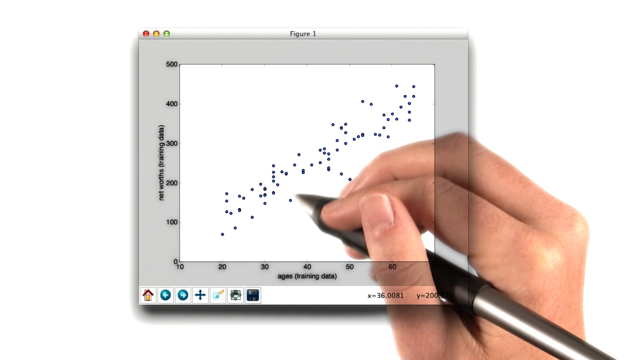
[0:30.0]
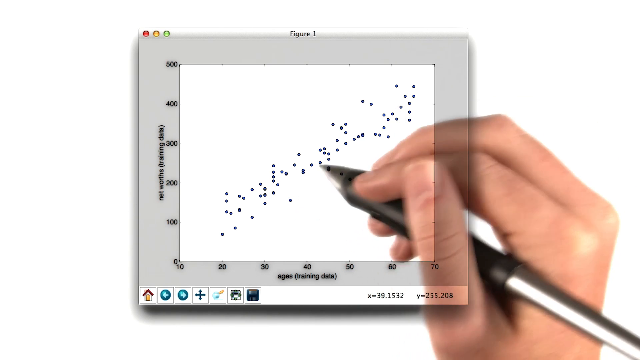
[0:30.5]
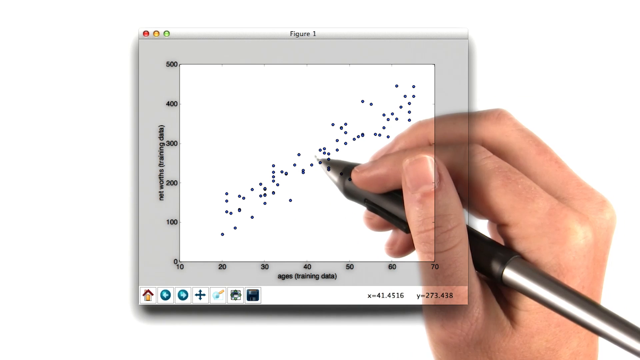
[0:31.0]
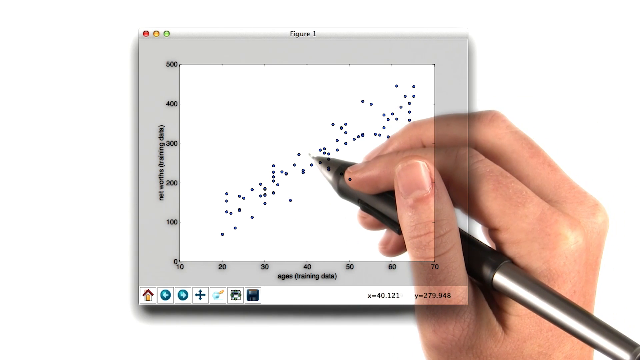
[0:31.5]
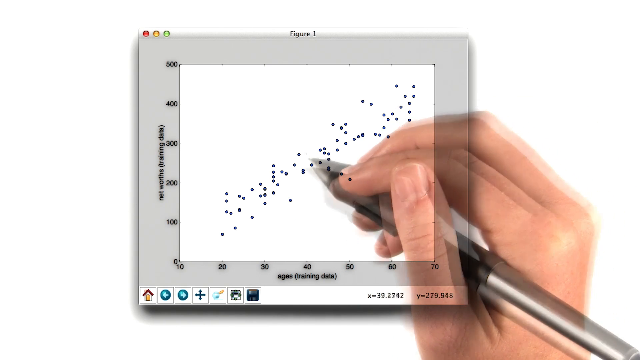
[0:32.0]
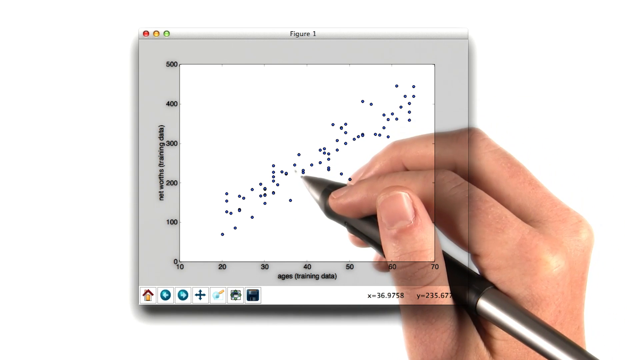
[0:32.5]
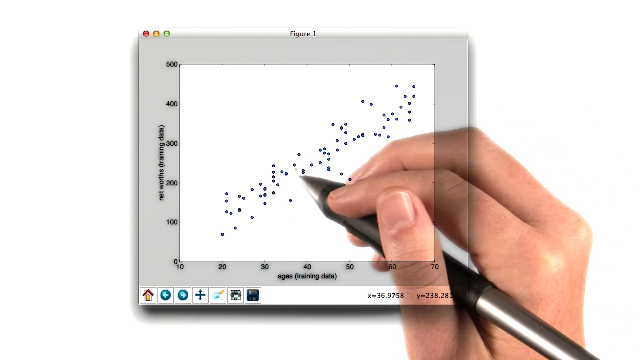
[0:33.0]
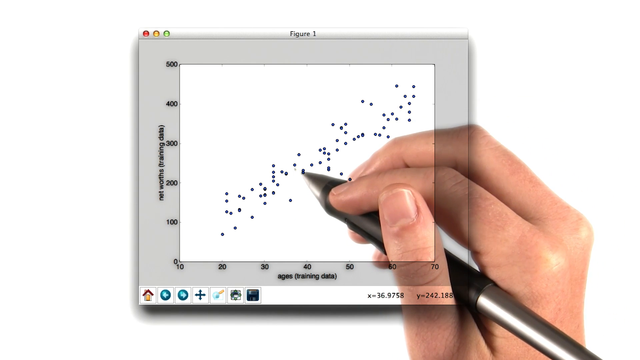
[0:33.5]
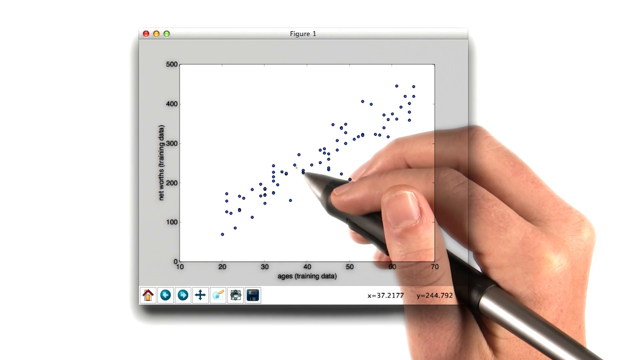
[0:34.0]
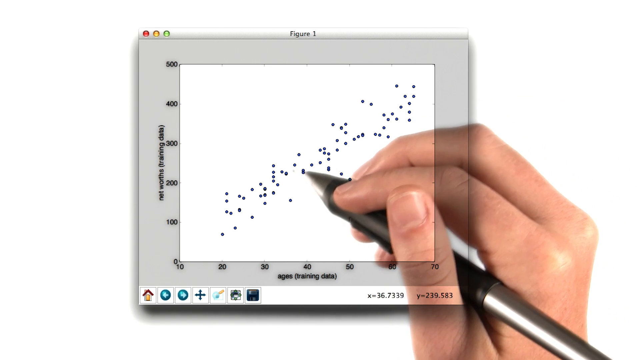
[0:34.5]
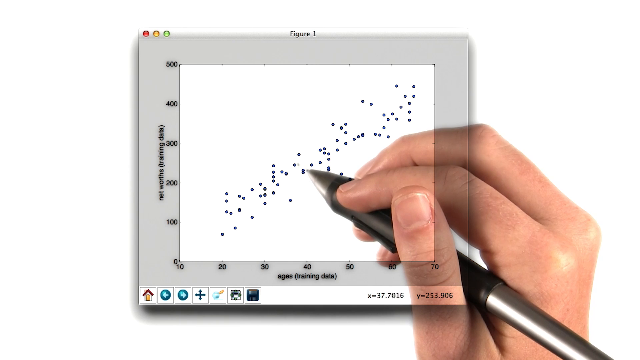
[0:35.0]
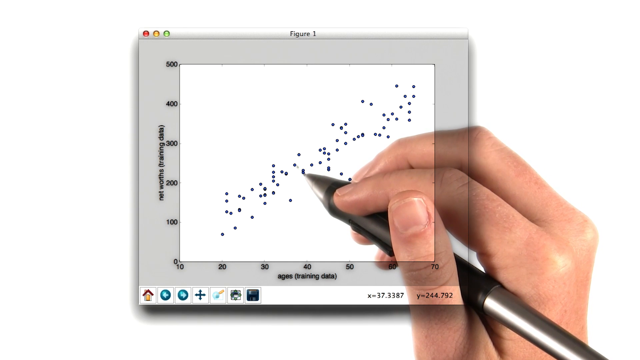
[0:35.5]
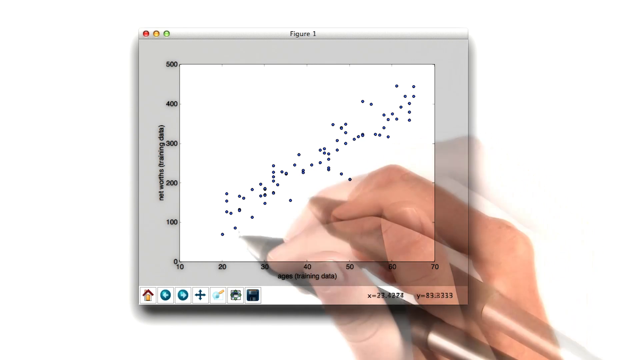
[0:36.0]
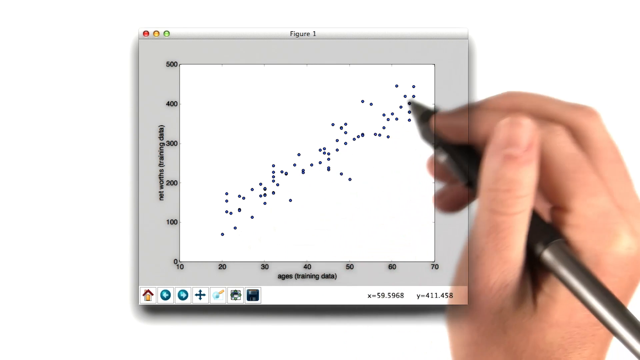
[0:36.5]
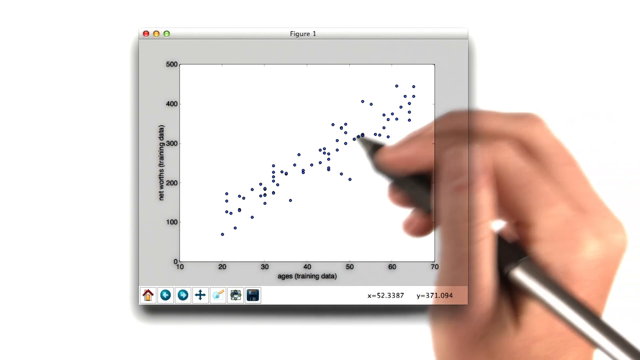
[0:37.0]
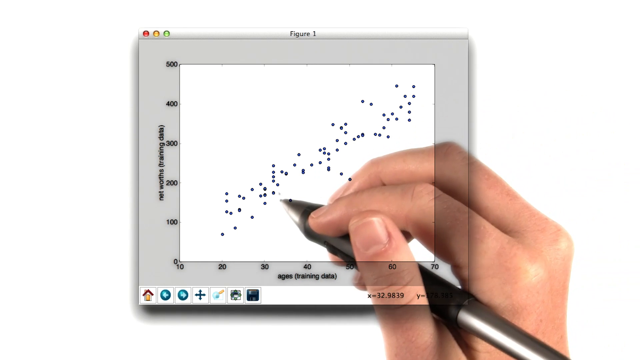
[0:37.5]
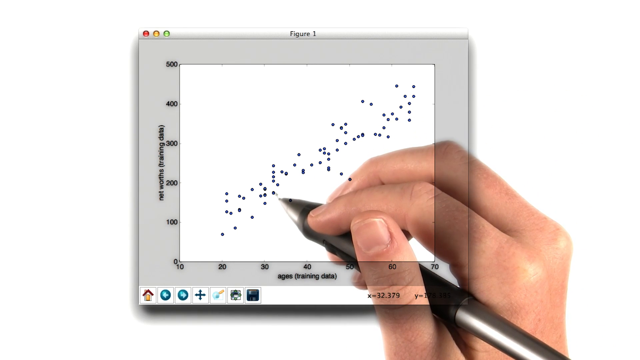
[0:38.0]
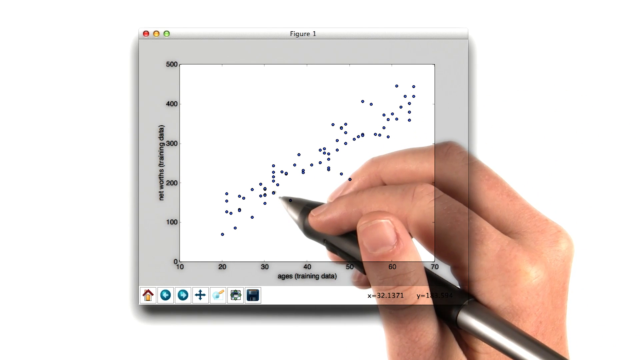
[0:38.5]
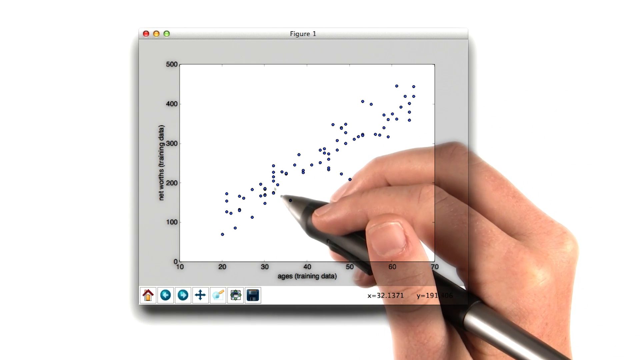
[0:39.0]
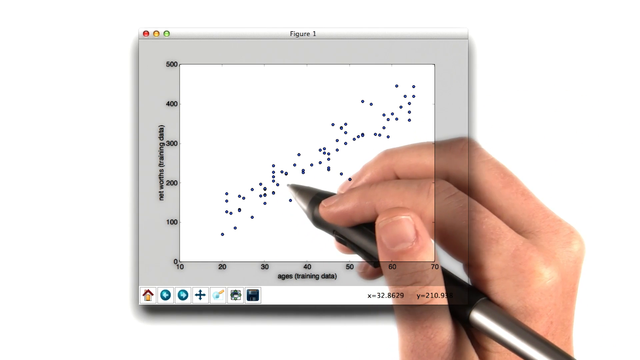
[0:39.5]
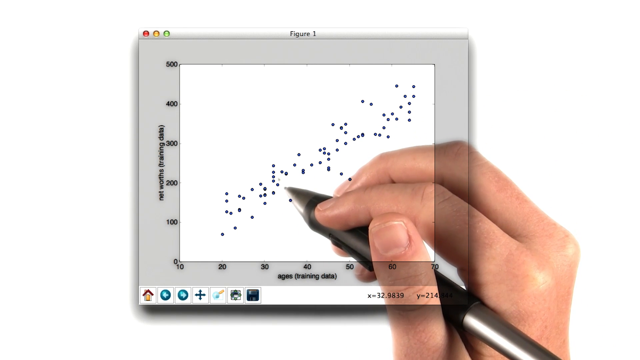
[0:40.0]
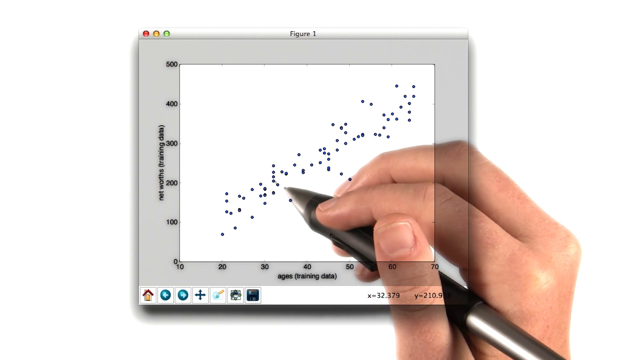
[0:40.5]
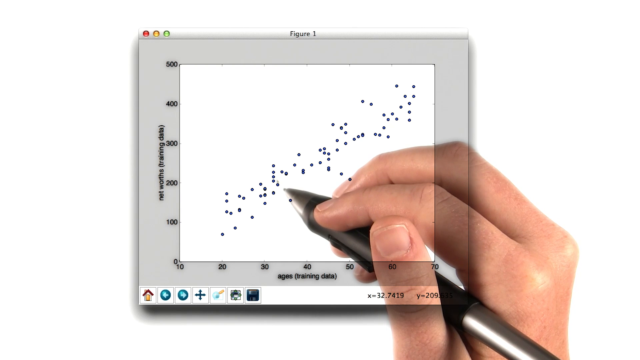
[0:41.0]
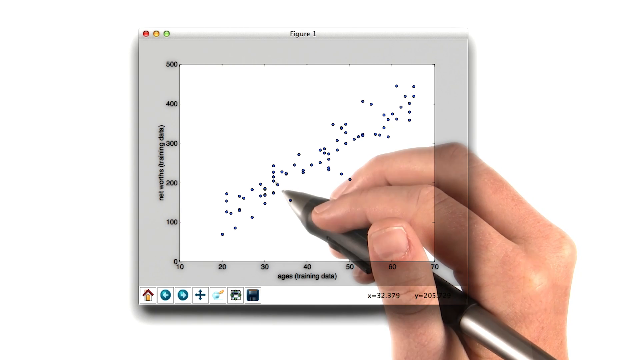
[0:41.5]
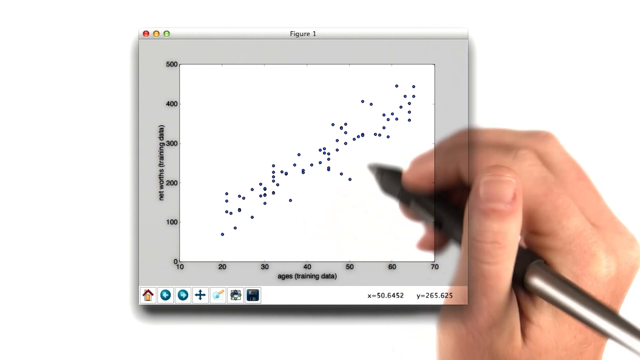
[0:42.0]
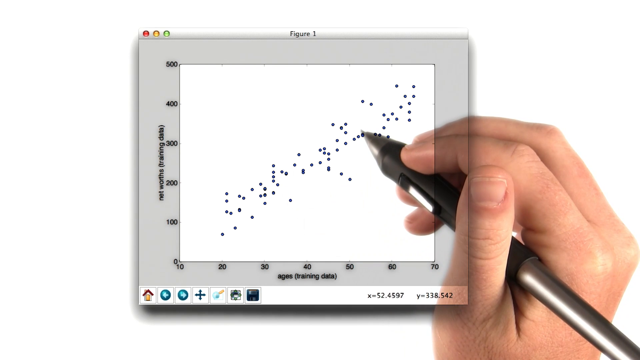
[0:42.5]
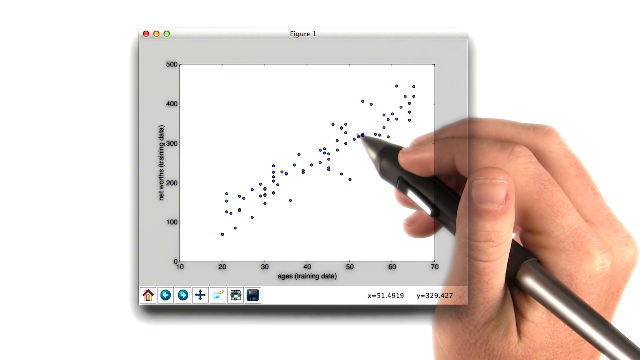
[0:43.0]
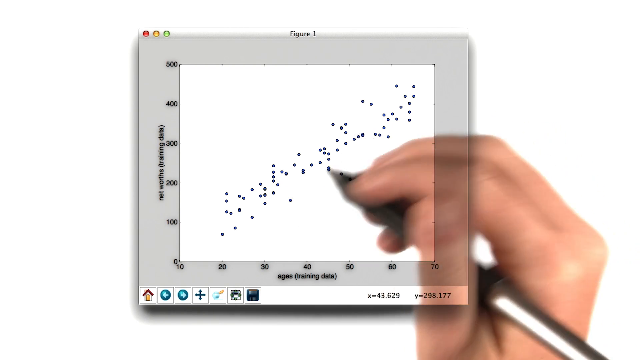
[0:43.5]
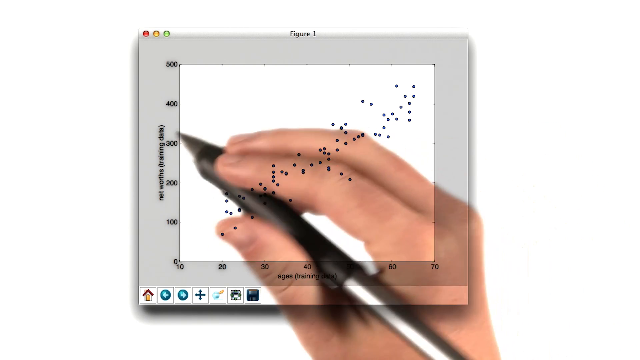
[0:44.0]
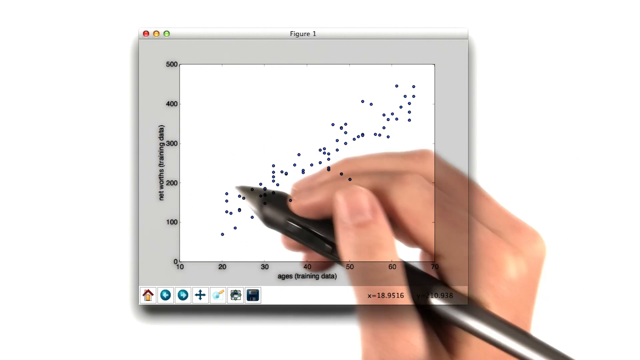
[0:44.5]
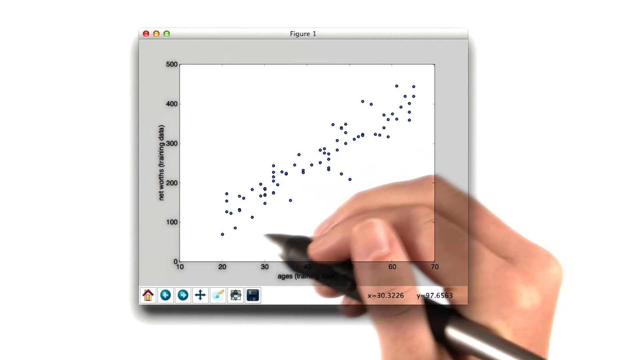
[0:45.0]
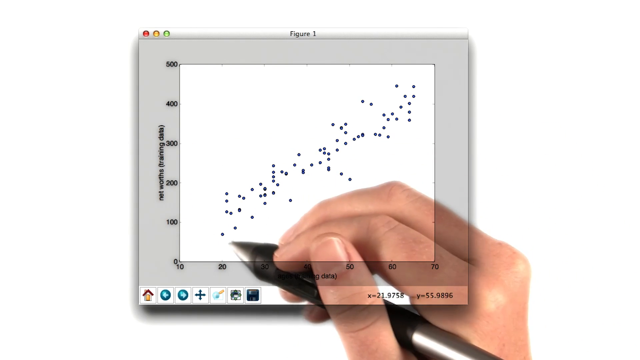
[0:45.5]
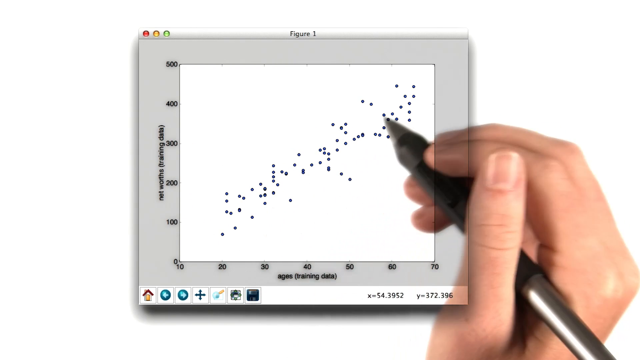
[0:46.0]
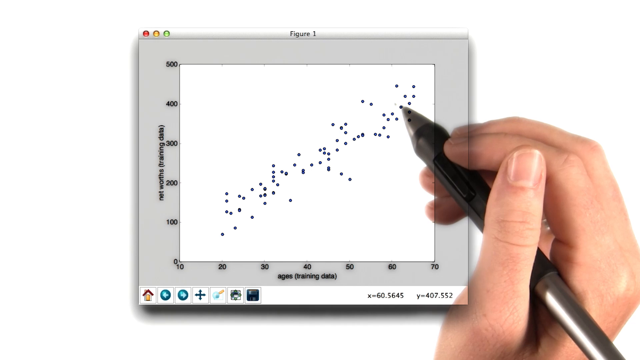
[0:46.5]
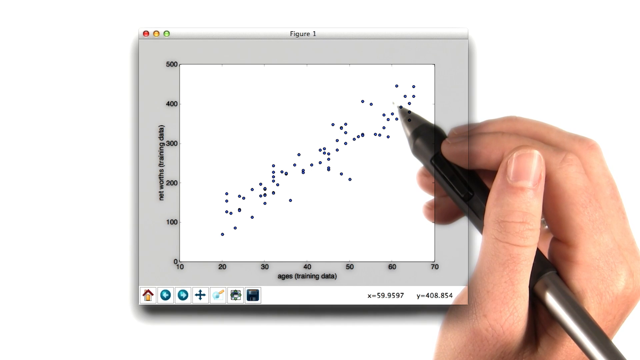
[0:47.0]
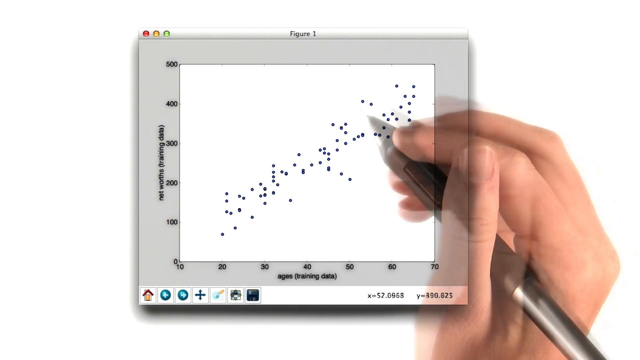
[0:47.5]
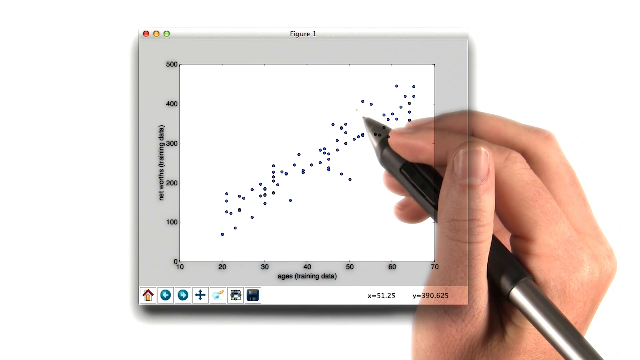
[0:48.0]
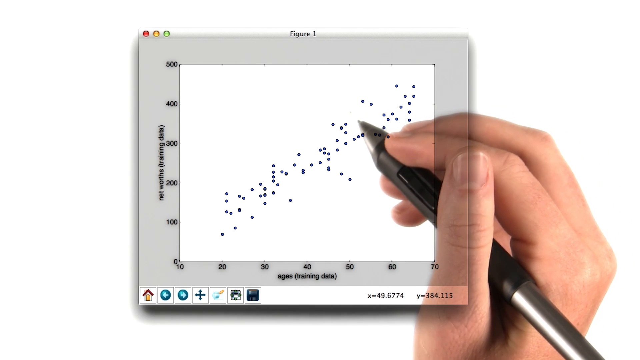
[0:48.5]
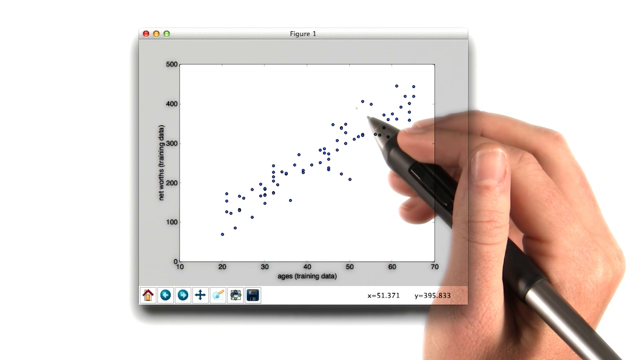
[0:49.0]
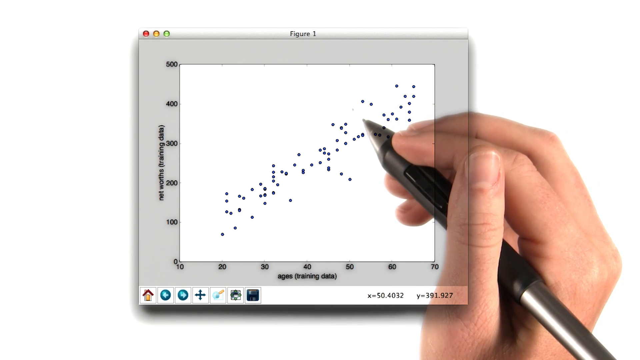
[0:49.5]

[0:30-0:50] The person points out a specific point on the scatterplot at what looks to be the 38 and 350 coordinate. In the bottom right-hand side of the window, the x and y coordinates are displayed in real time, following the location of the person's pen. The low resolution makes details difficult to see.